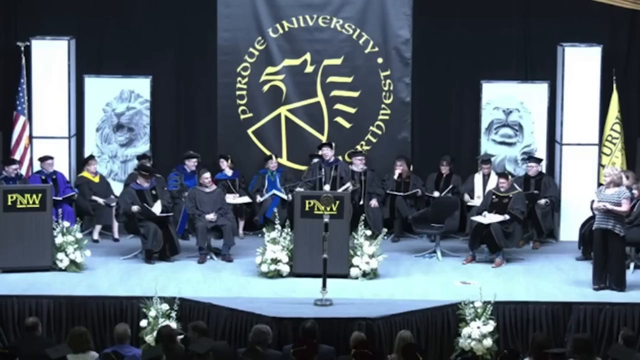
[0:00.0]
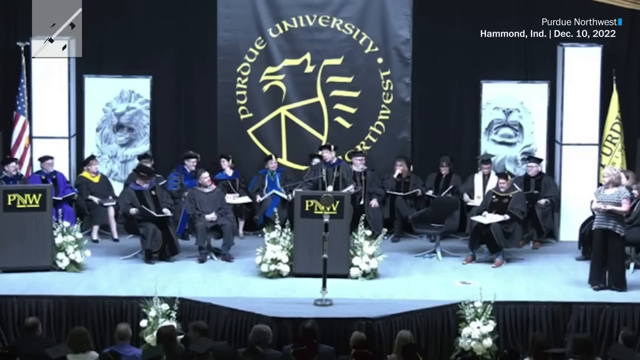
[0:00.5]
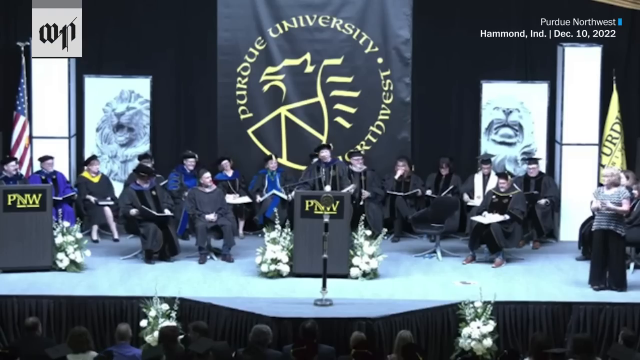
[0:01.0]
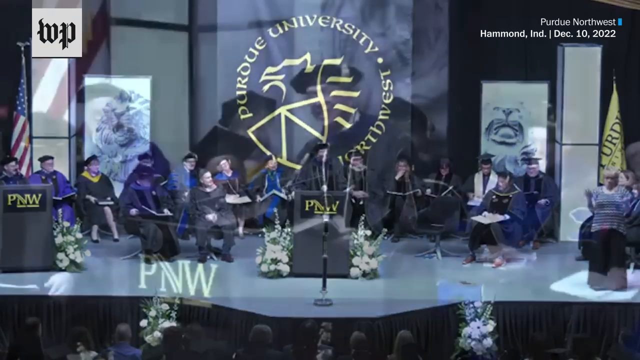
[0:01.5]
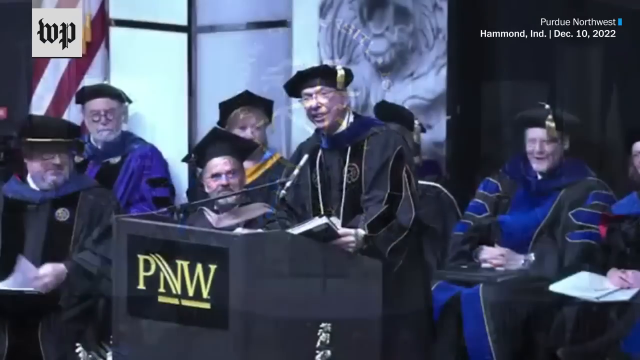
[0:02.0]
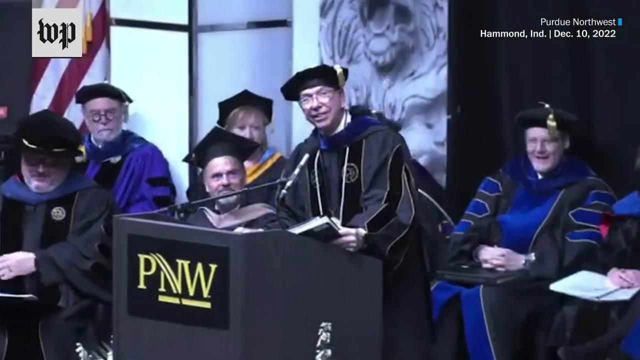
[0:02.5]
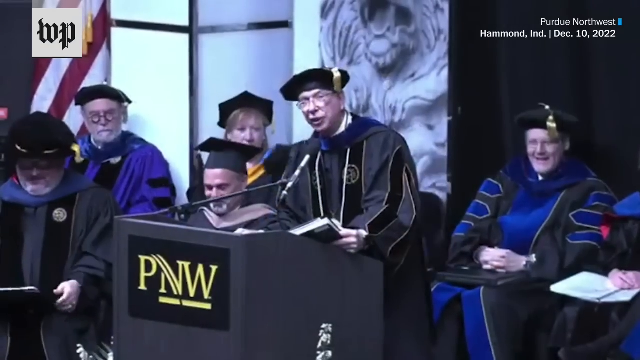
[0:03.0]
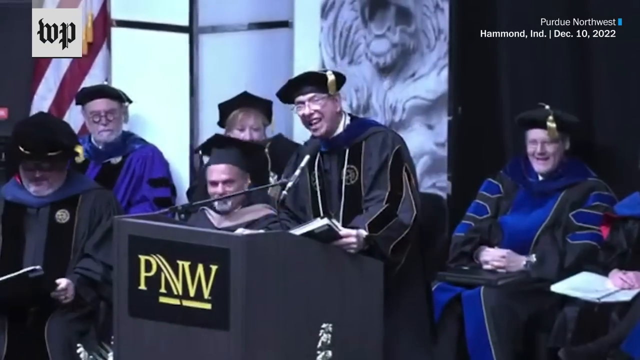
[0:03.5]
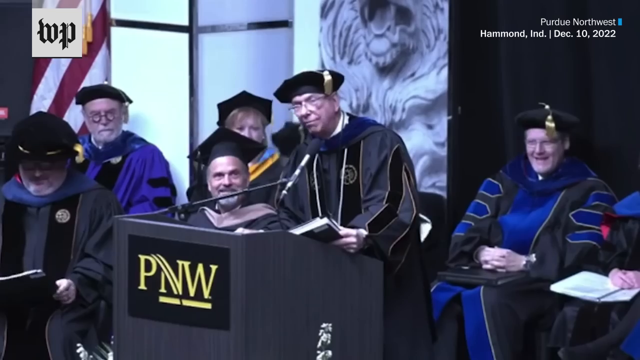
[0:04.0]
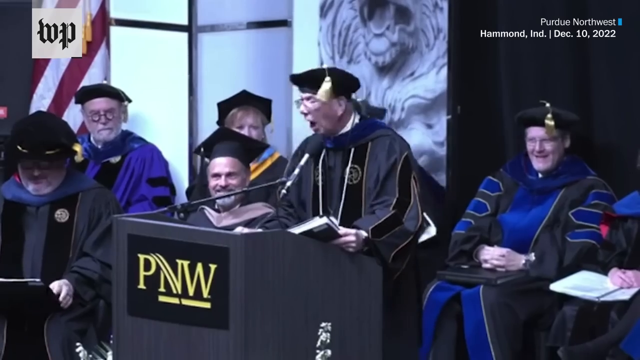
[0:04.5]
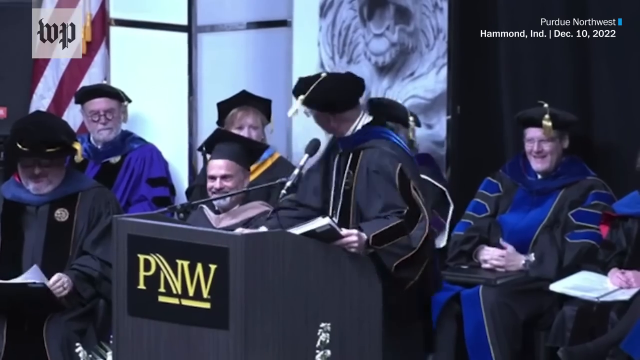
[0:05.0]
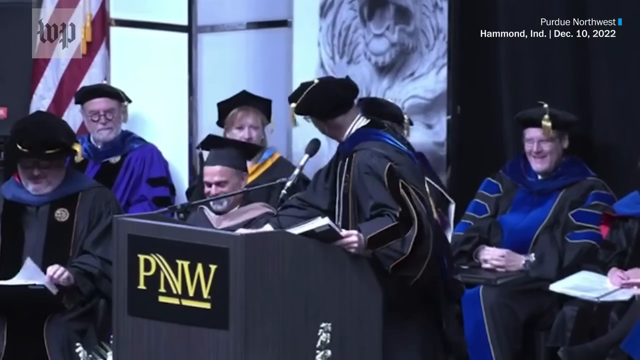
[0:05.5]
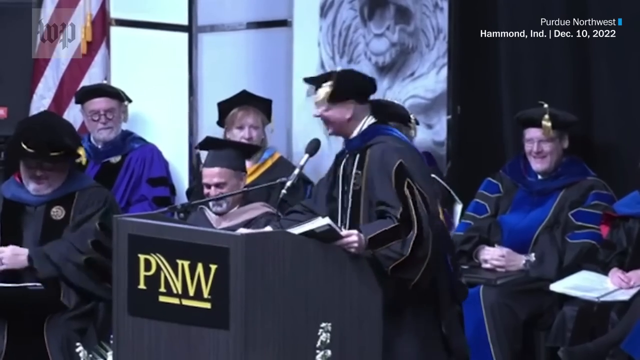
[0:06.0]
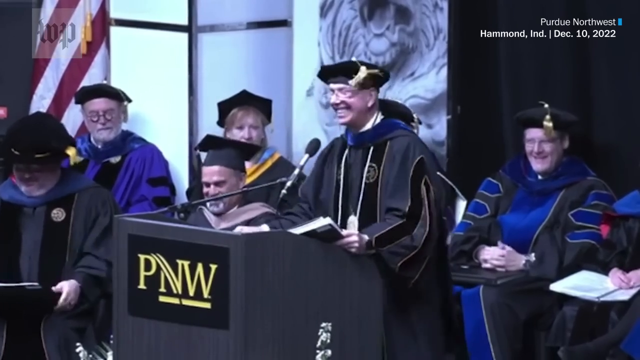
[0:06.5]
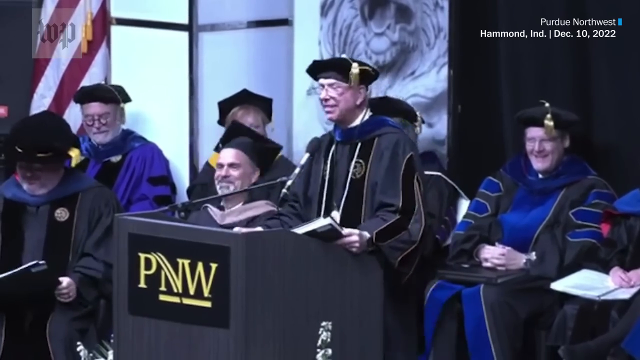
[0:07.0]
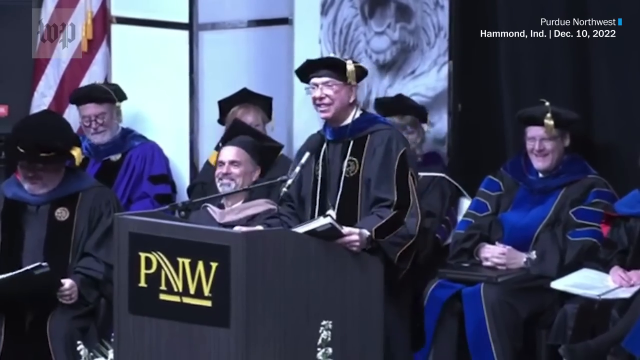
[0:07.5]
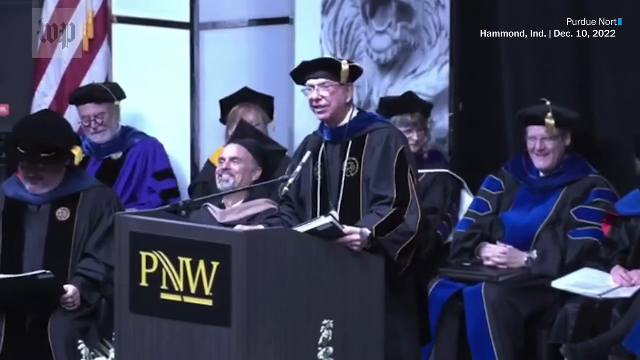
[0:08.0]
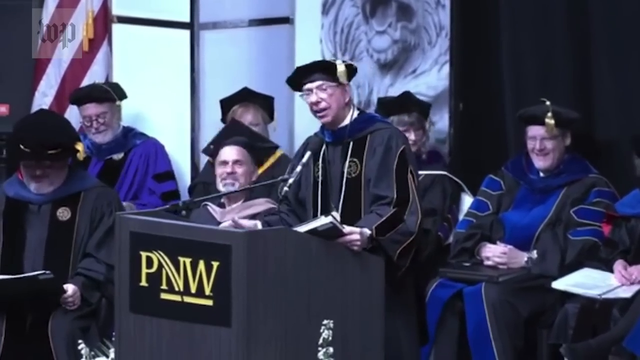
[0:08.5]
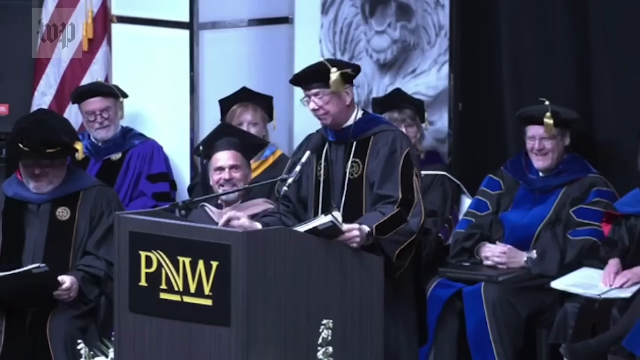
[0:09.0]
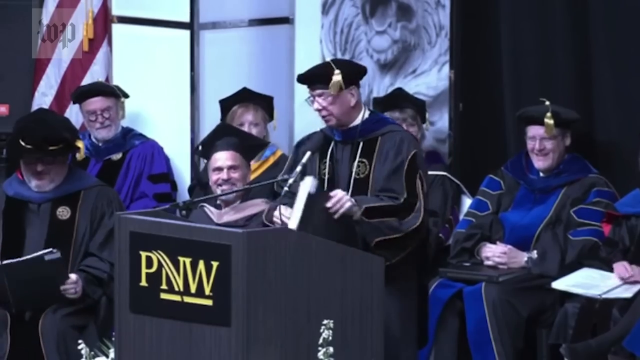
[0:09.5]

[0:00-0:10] A graduation ceremony is underway. Many people in graduation gowns and graduation hats sit on a stage around a podium, where a man in a black robe is speaking. Purdue University Northwest can be seen in the background, and the podium has "PNW" on it. A woman in a striped shirt is on the right side of the screen, and multiple lions appear on screens in the background. An American flag is on the left of the screen and a yellow Purdue flag is on the right. The camera then zooms in on the man at the podium, and text at the top right of the screen reads "Purdue Northwest Hammond Indiana December 10, 2022."